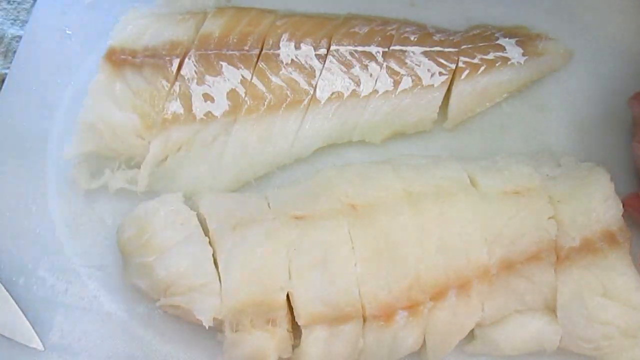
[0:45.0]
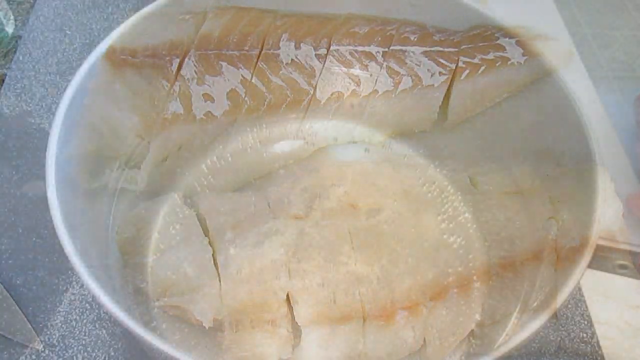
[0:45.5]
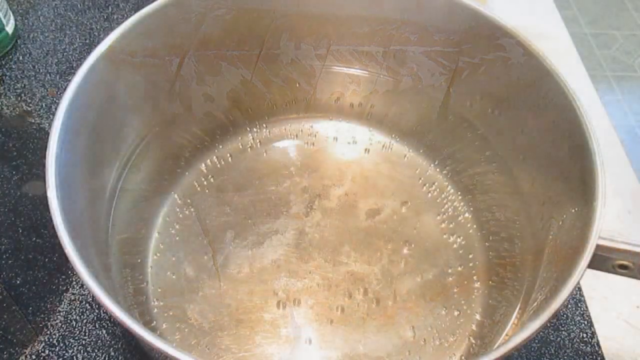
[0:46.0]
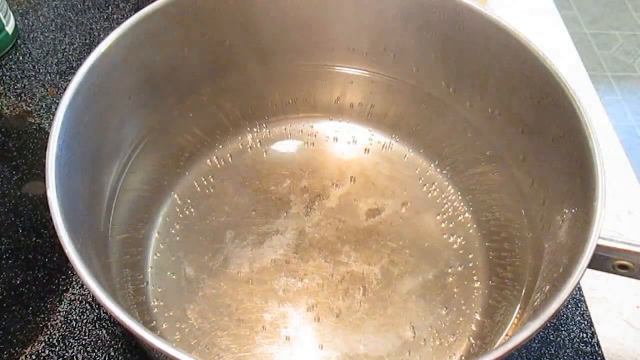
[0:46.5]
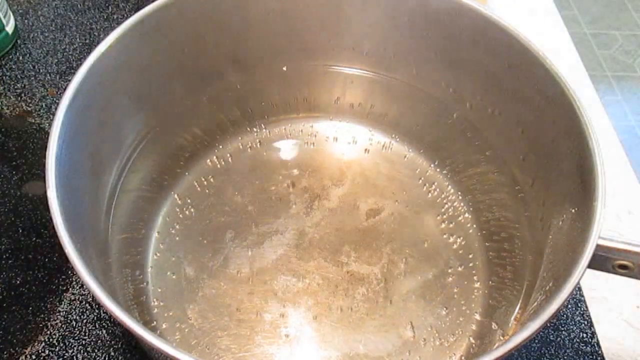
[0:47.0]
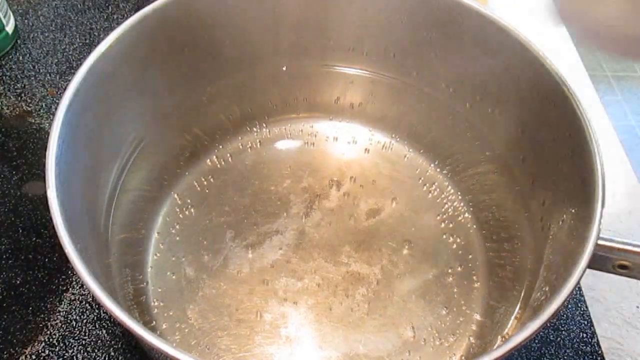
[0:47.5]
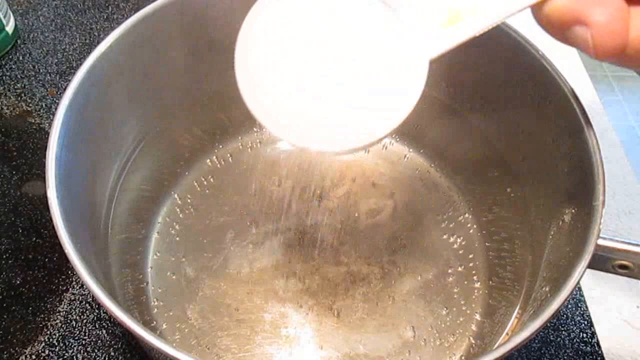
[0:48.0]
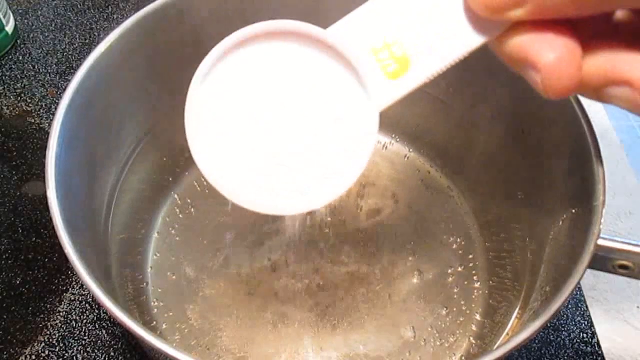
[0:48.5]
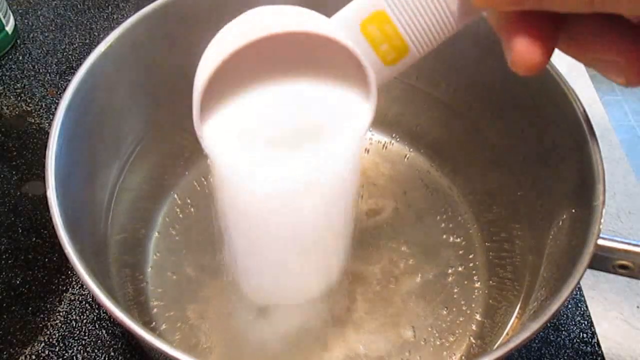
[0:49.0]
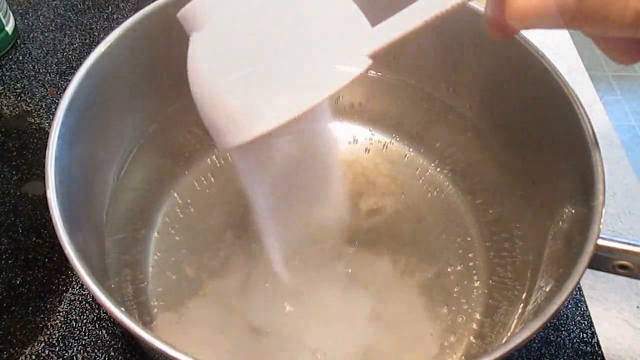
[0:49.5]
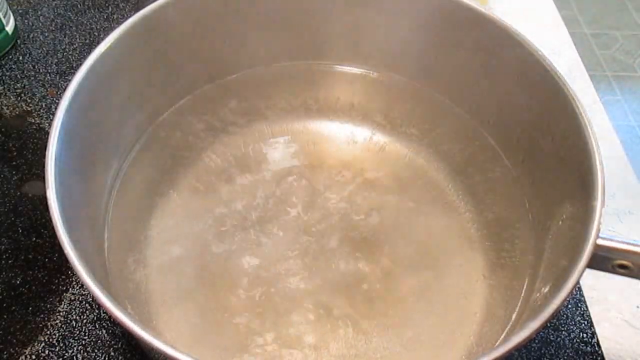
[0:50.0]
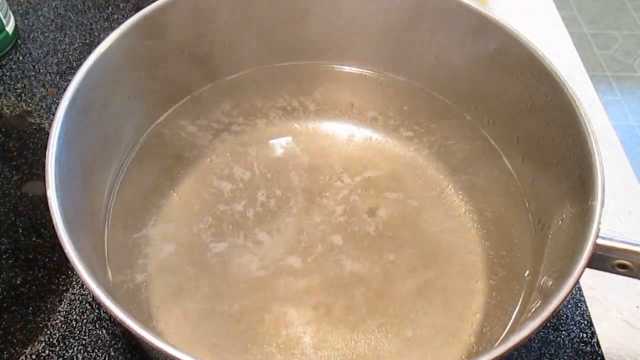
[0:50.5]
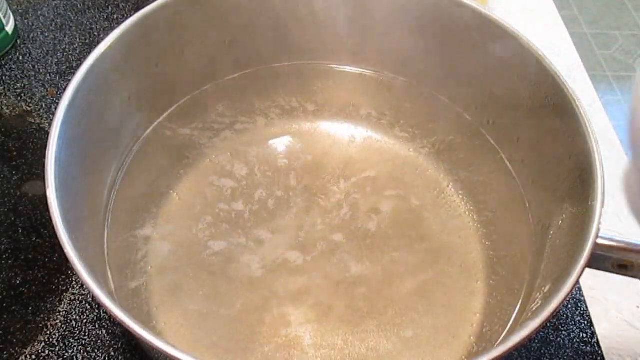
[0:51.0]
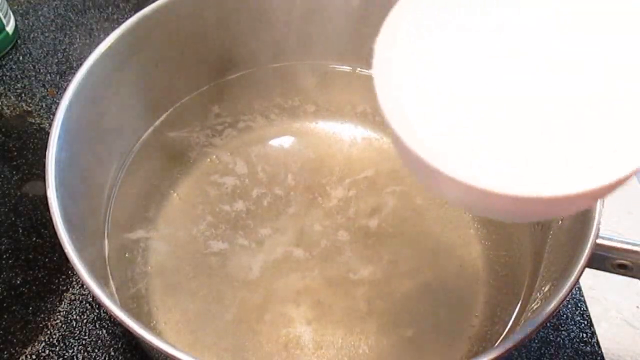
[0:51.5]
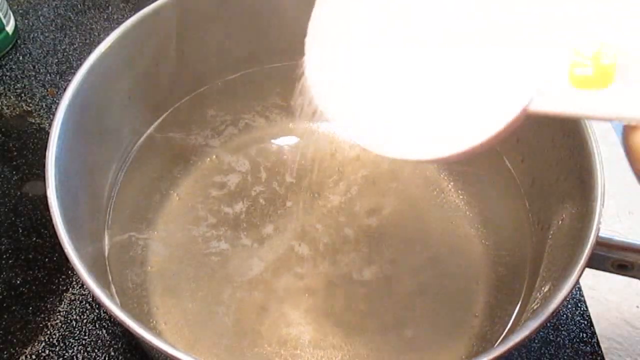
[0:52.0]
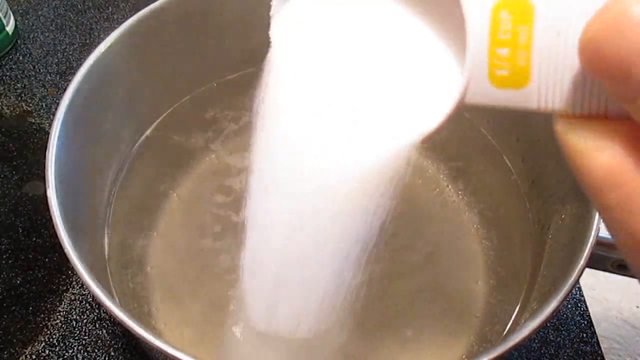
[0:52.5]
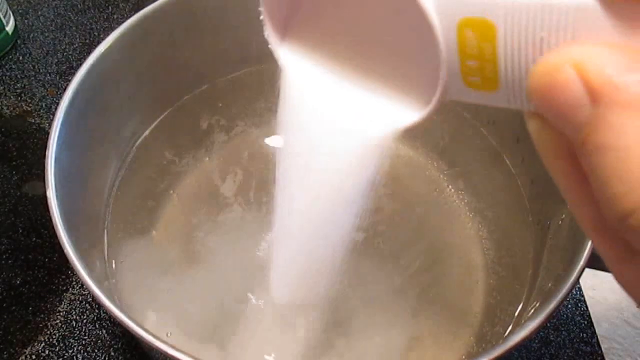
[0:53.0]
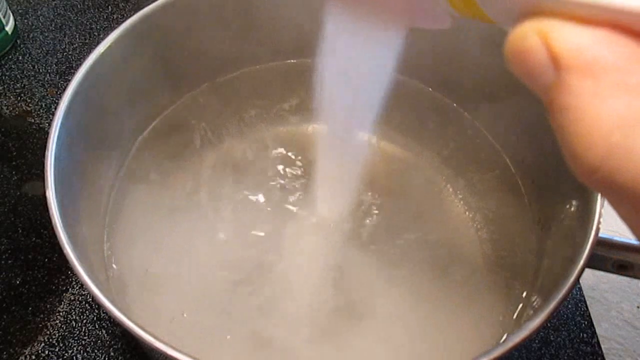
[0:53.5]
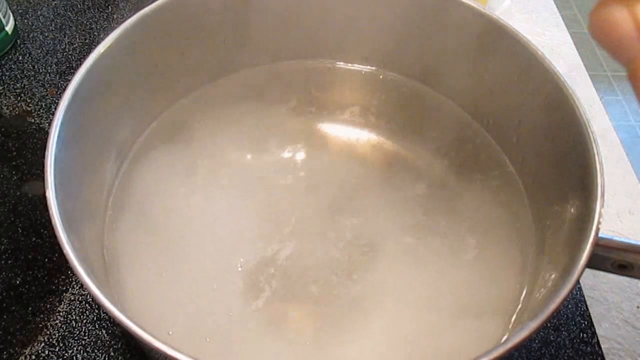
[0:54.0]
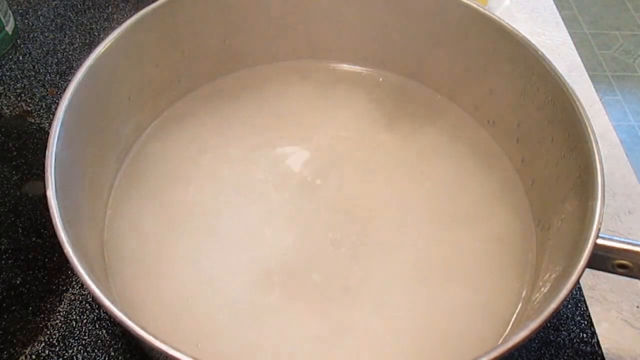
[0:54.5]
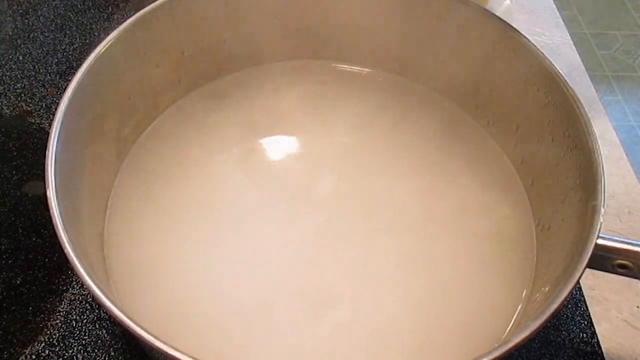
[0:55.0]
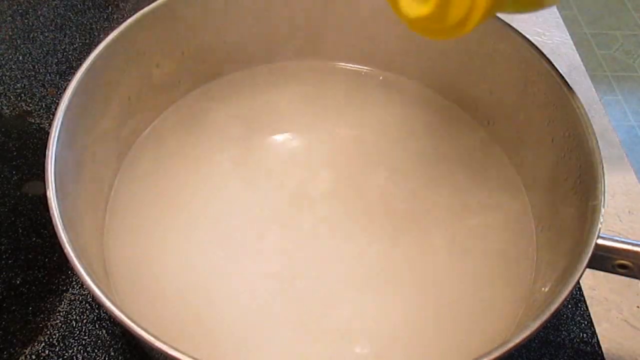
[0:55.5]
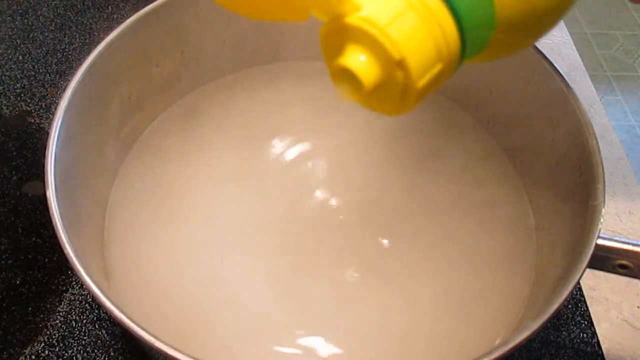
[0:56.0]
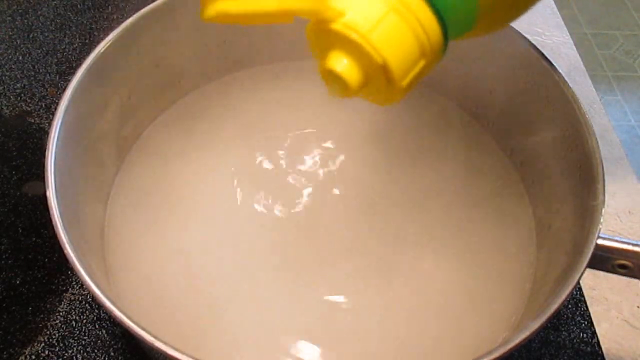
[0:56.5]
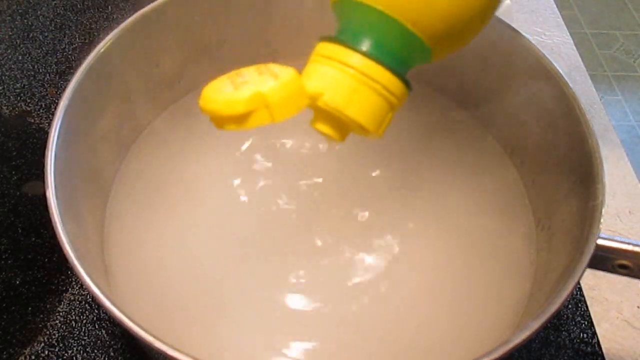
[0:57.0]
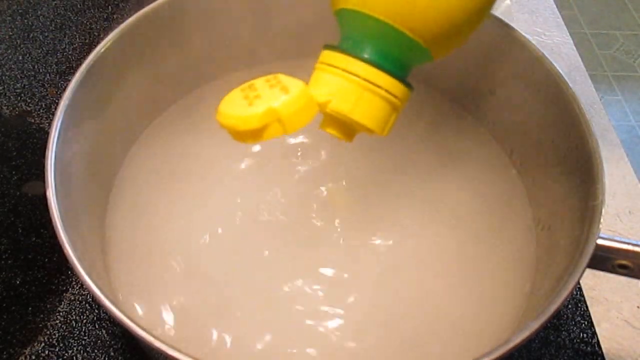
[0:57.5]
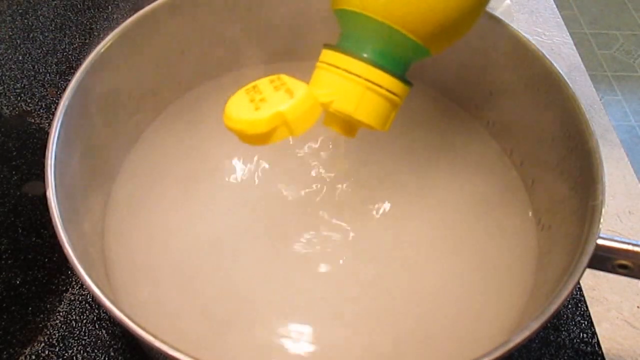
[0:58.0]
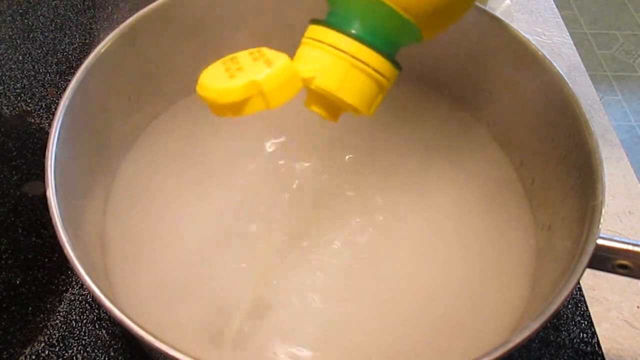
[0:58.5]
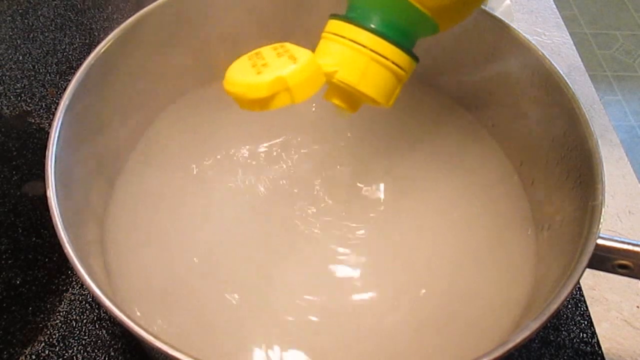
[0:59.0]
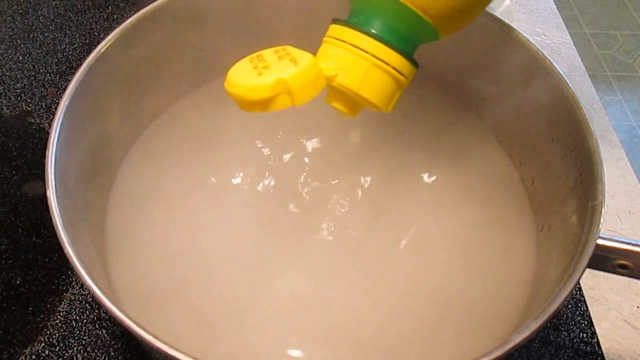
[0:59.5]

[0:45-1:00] The camera looks down into what looks like a large stainless steel cooking pot, maybe a two-gallon size. It holds a clear liquid that looks like water with some oil in it. The water is hot, with small bubbles, but has not come to a full boil. A white substance, potentially cornstarch, is added from a measuring cup, maybe a third of a cup at a time, and two cups of it are put in. A bottle of what looks like liquid lemon appears, and a couple of drops from it are added to the water.